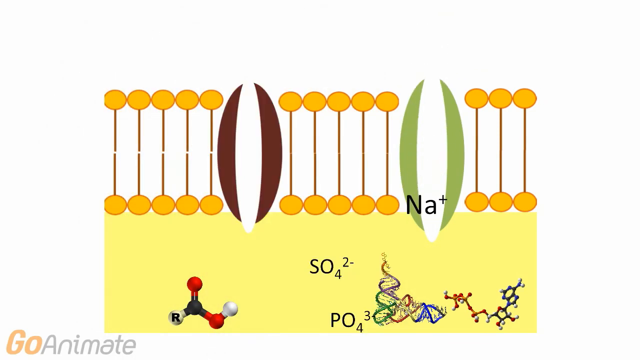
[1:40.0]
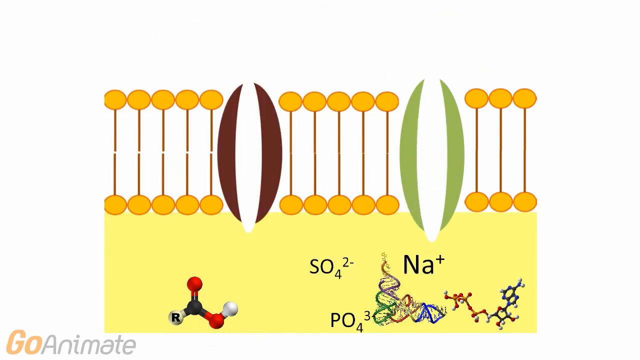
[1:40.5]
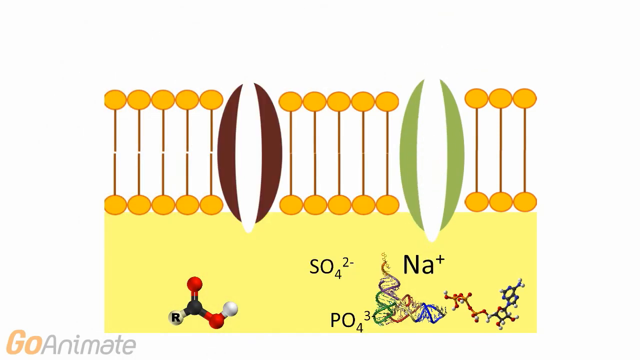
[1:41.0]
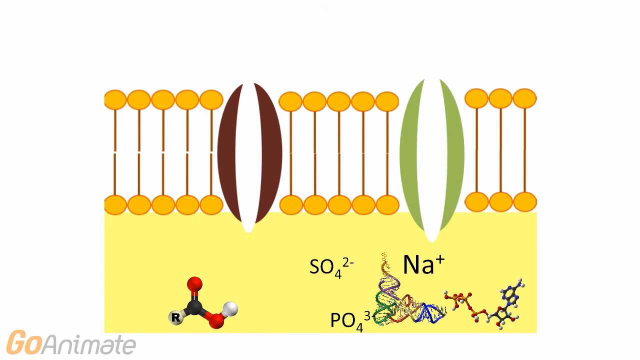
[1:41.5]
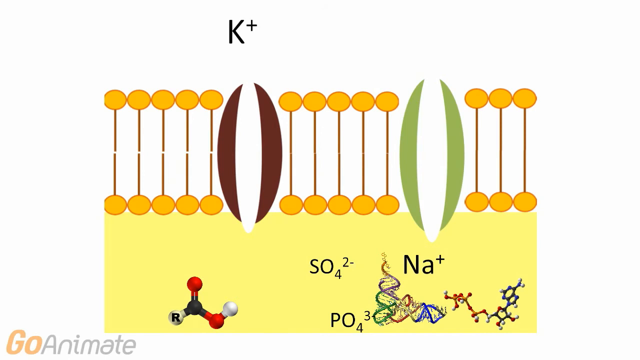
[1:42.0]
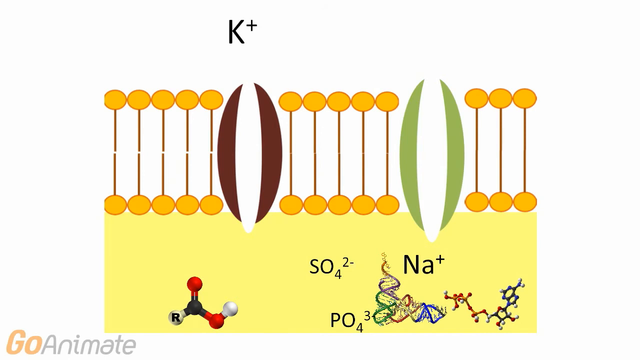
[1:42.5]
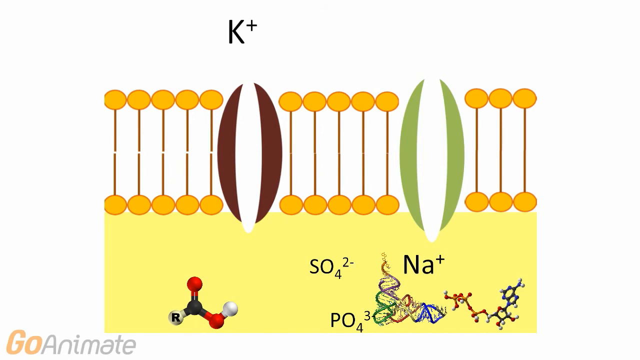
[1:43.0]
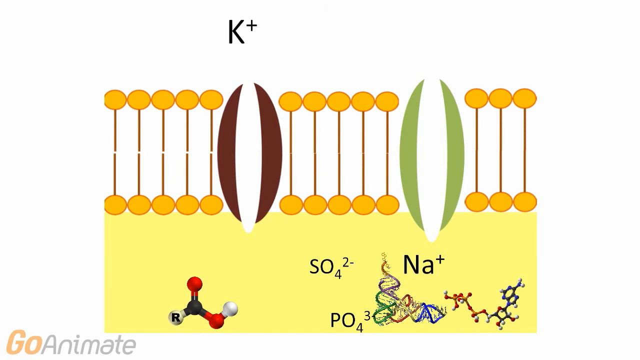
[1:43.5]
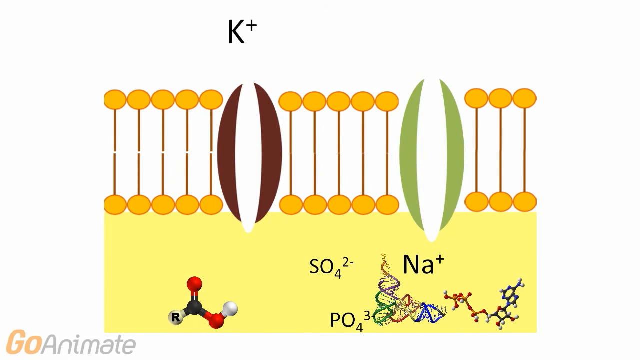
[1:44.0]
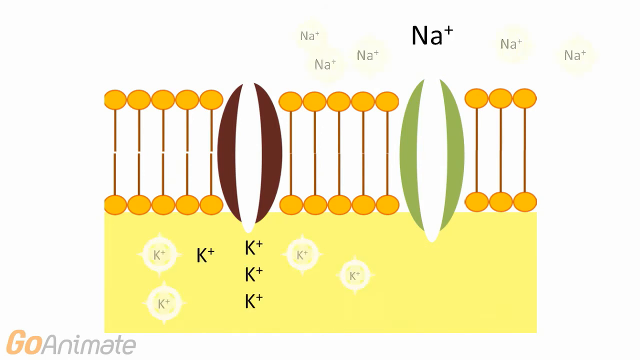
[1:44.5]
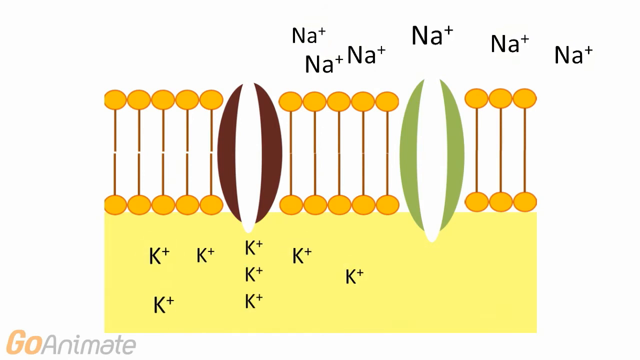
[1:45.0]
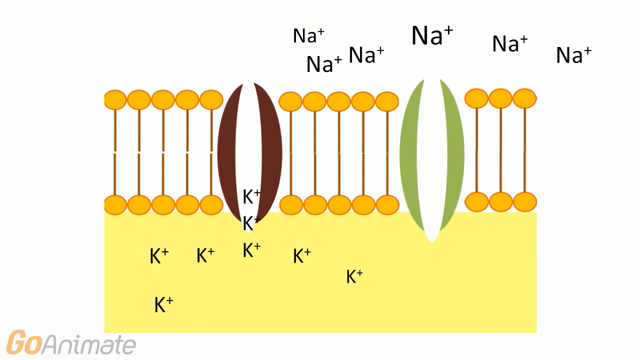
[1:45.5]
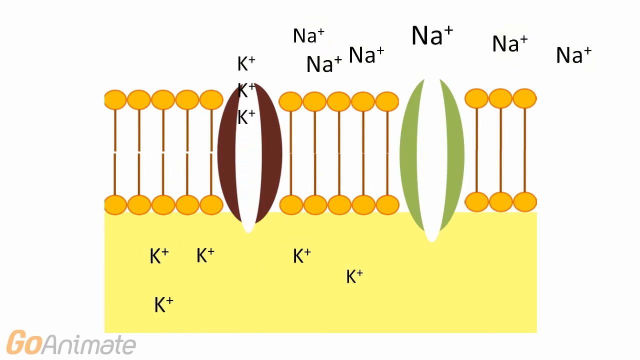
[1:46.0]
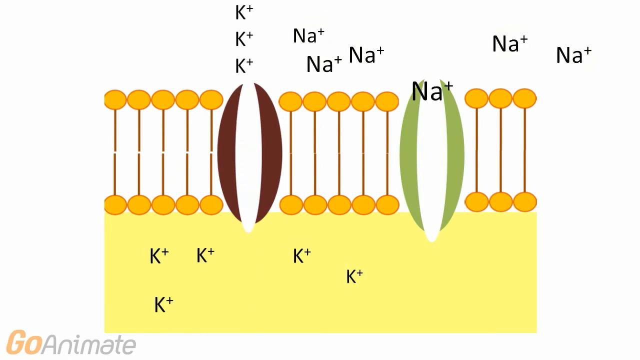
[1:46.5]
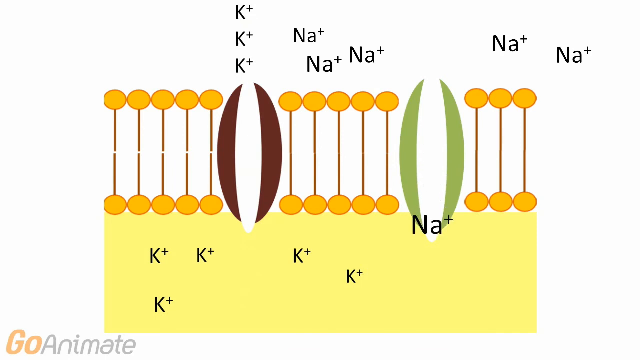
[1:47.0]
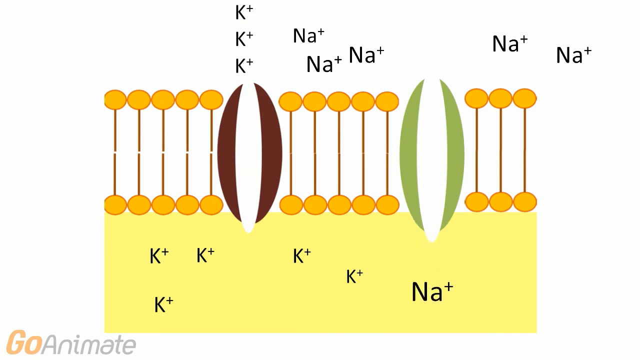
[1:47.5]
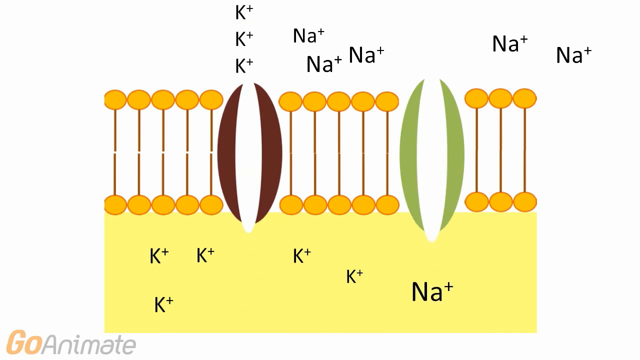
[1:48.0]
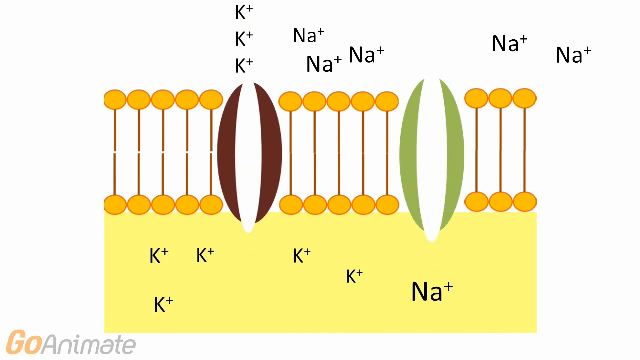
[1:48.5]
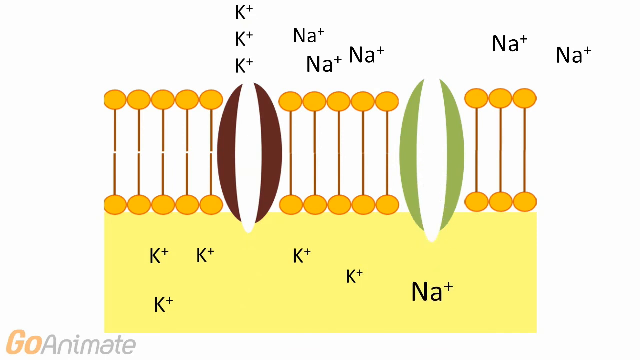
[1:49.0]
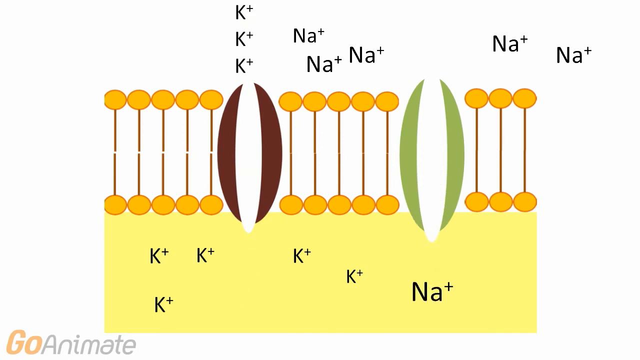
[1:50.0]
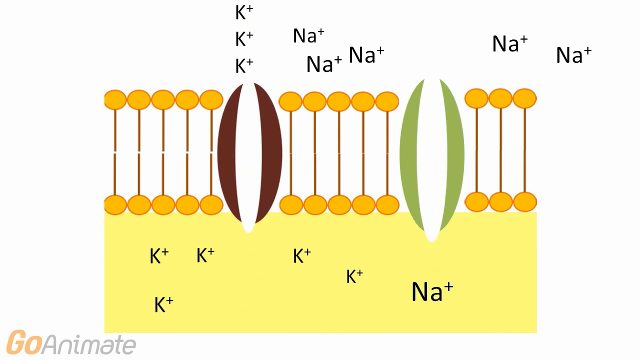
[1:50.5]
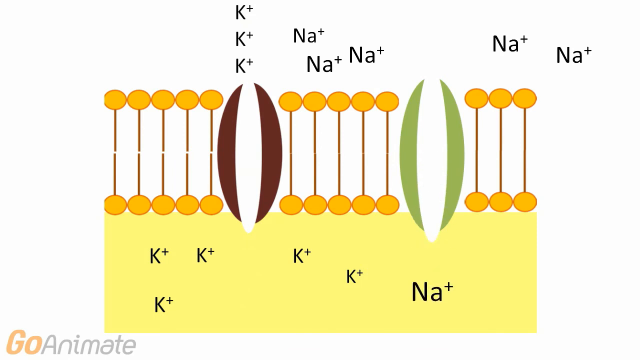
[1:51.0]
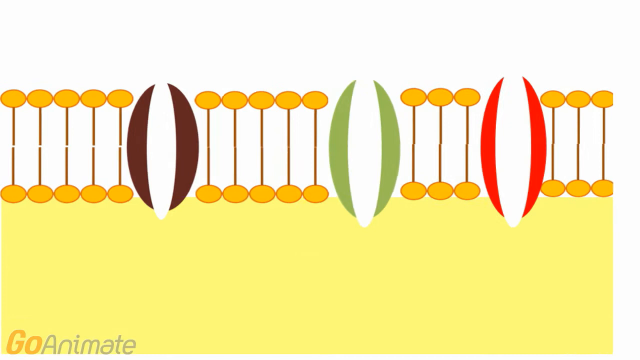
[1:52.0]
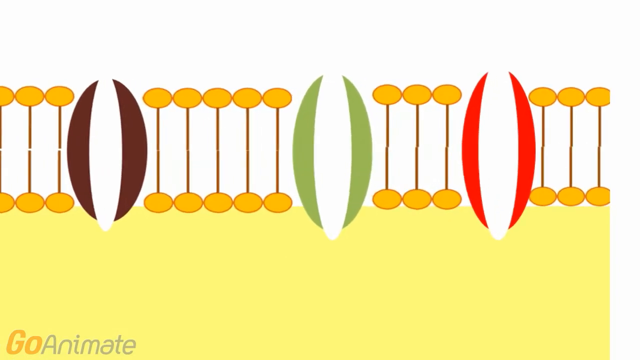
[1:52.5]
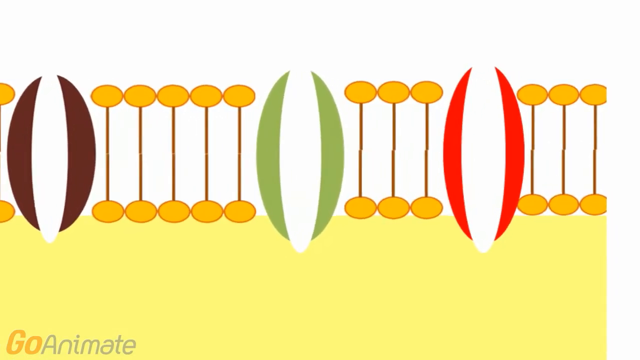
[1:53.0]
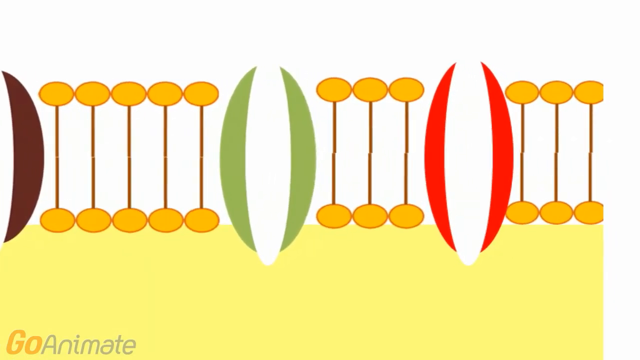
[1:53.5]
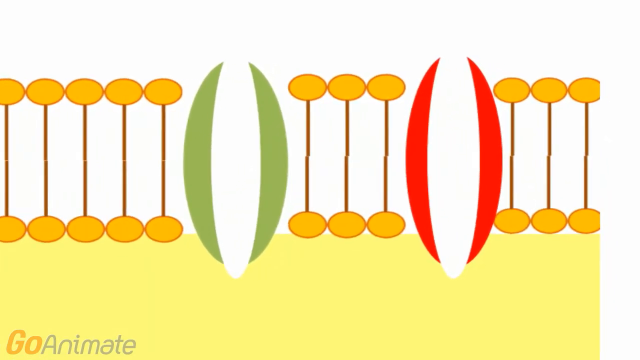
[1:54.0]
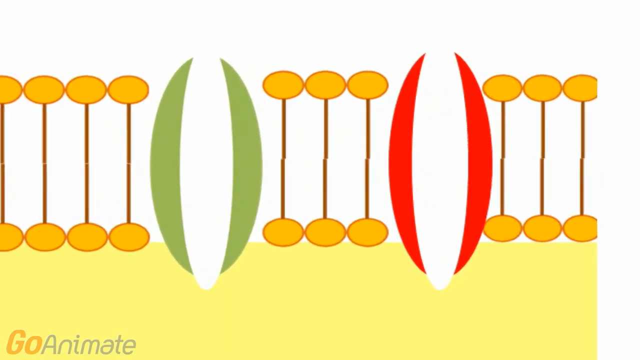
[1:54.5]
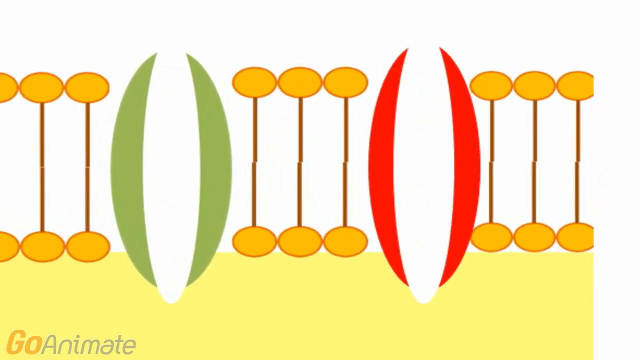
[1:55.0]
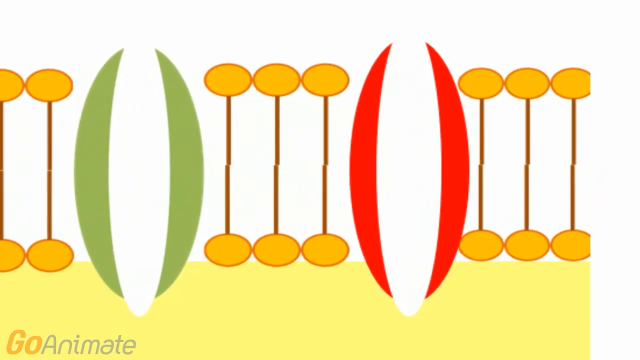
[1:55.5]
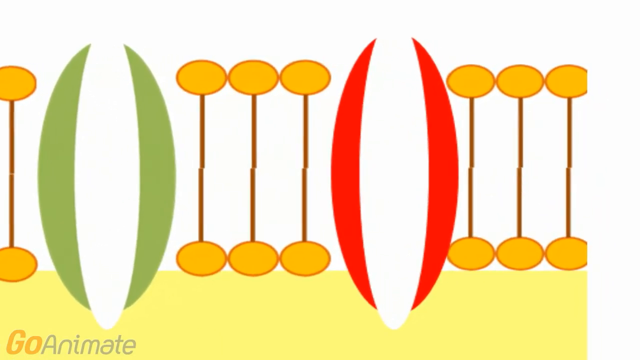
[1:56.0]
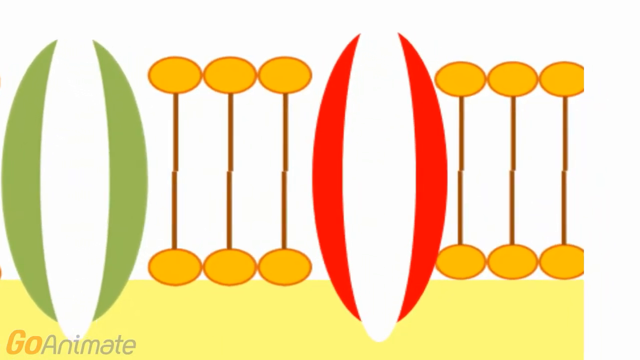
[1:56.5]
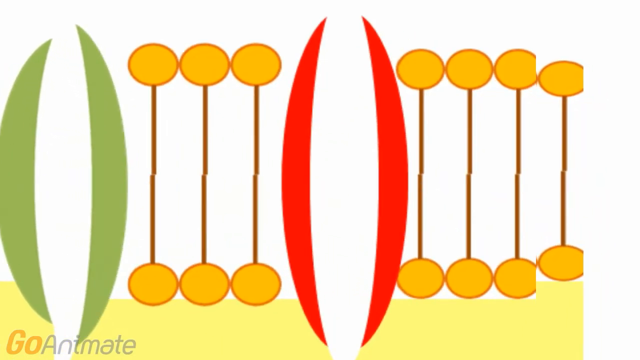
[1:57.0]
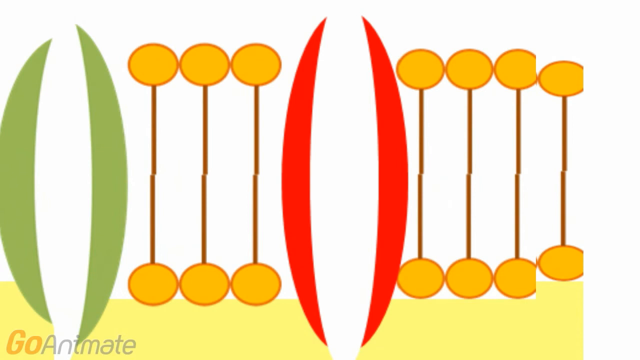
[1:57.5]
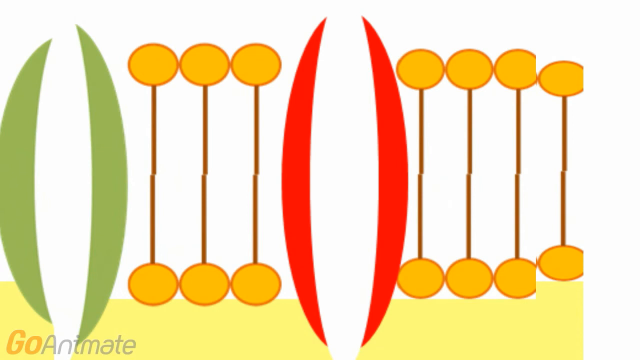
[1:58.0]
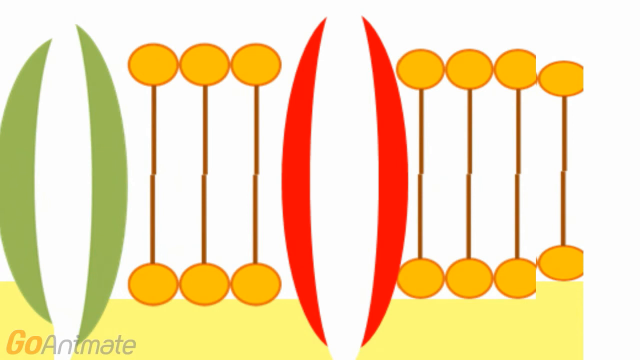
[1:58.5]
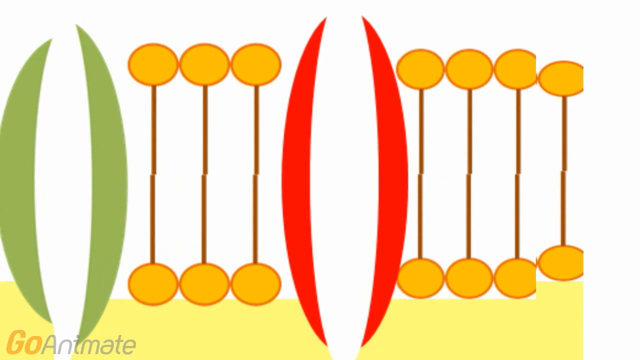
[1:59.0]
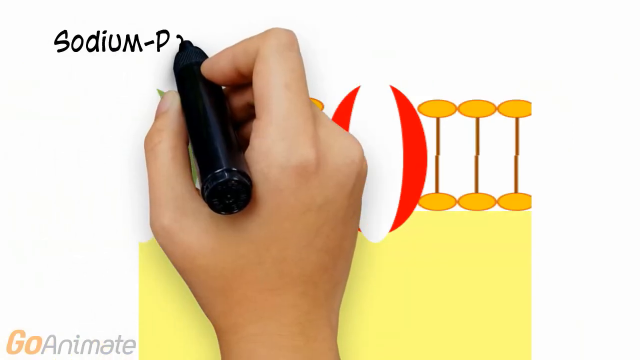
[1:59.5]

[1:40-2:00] The stylized neuron drawing shows a long yellow rectangle at the bottom and, on top, three sets of vertical lines, five, five, and three, with ovals attached at either end. Between them are two parentheses-shaped objects, the left one with brown sides and the right one with green sides. On the yellow at the bottom are an image of an atom of an element, the chemical formula SO4 2- with another formula, PO4 3, below it, an image of a double helix next to that, and beyond it an image of several molecules clumped together. In the green parentheses, the sodium symbol Na+ moves down into the yellow area, and the potassium symbol K+ is above the brown parentheses. The area outside the neuron fills with several Na+ symbols, and the yellow inside fills with several K+ symbols. Three K+ symbols move up through the brown parentheses, and a single sodium moves down through the green parentheses. The camera then pans in on a new set of parentheses, not seen before, to the right of the green parentheses, with red sides.